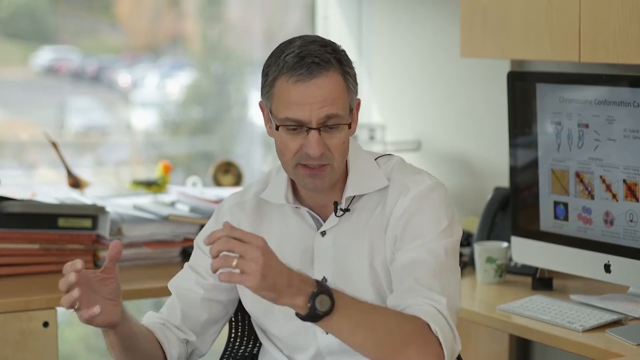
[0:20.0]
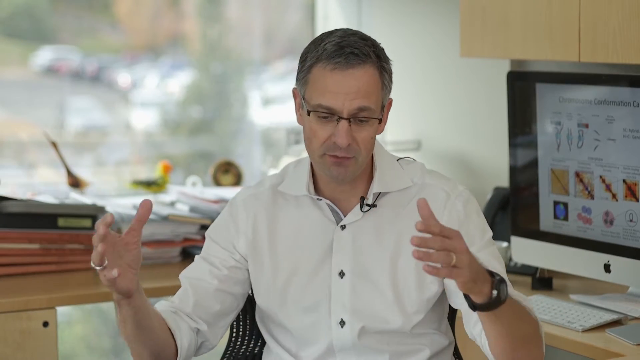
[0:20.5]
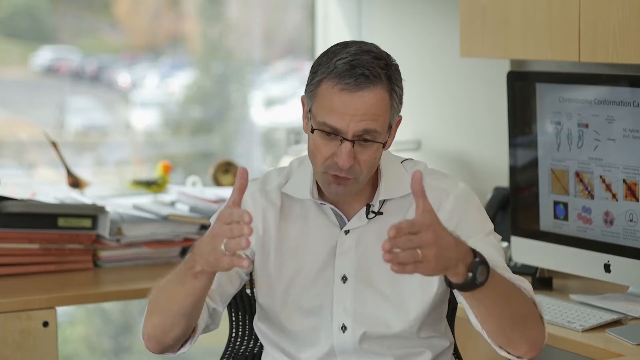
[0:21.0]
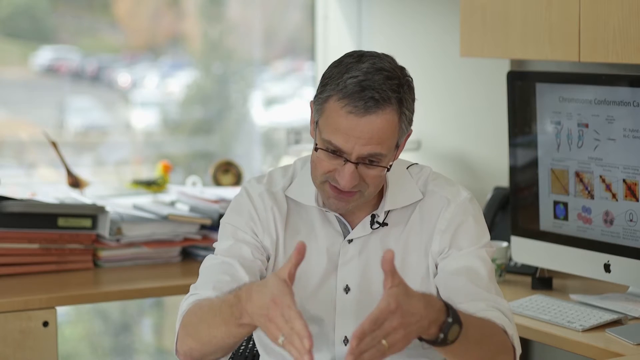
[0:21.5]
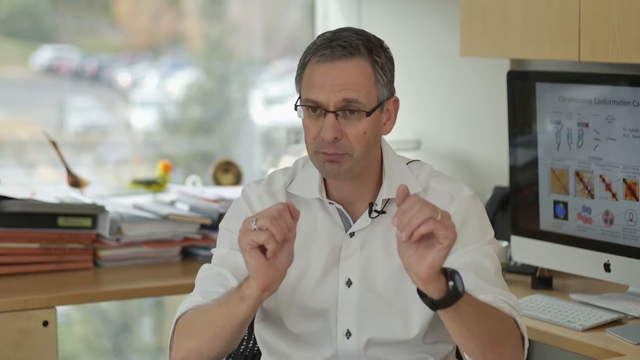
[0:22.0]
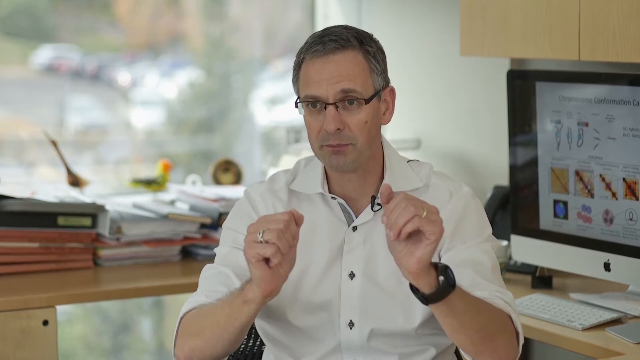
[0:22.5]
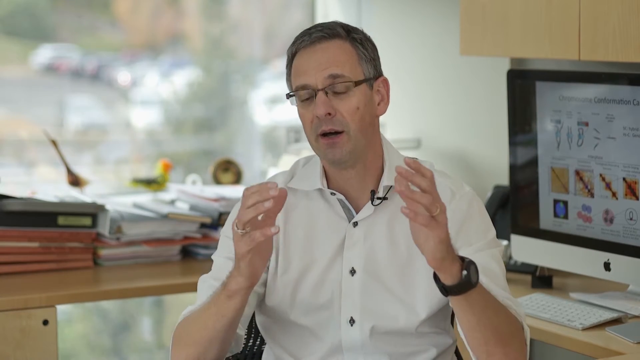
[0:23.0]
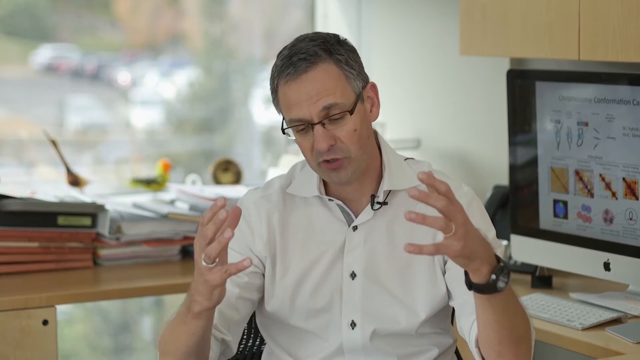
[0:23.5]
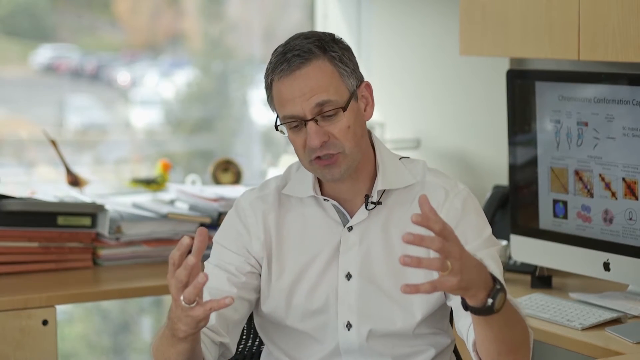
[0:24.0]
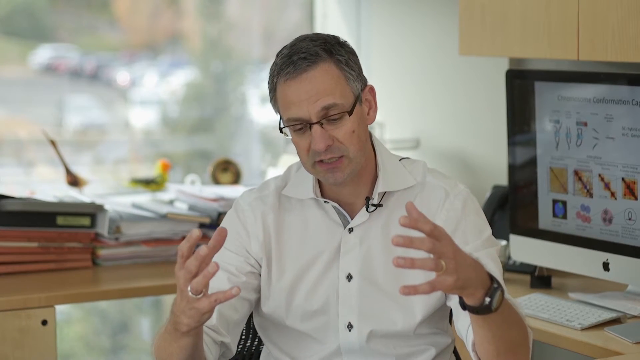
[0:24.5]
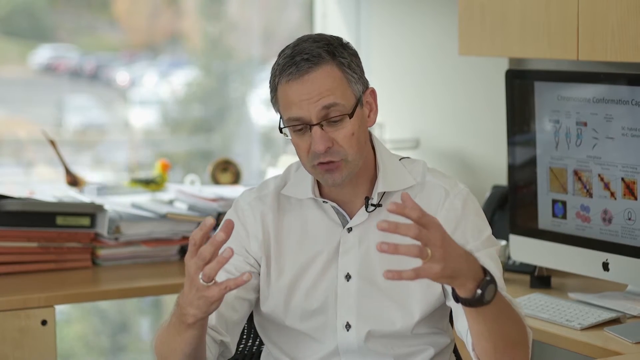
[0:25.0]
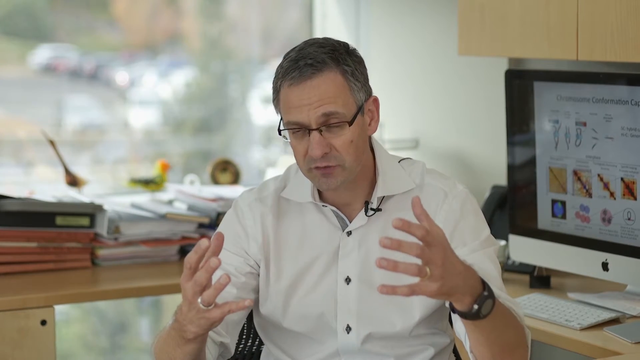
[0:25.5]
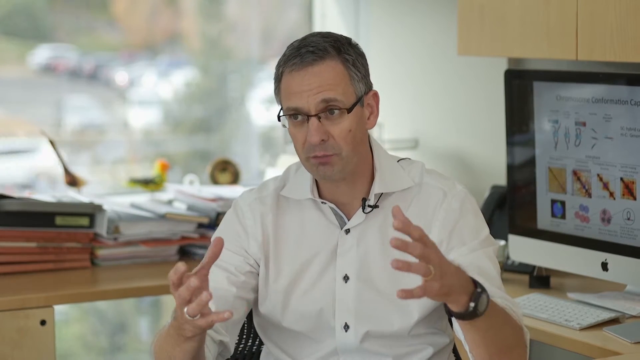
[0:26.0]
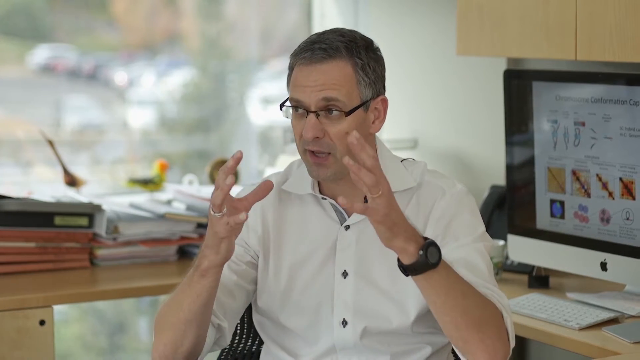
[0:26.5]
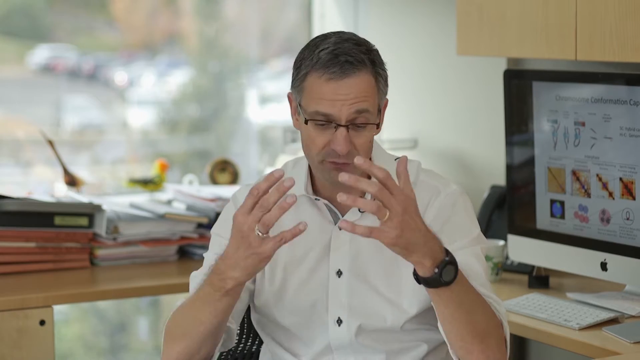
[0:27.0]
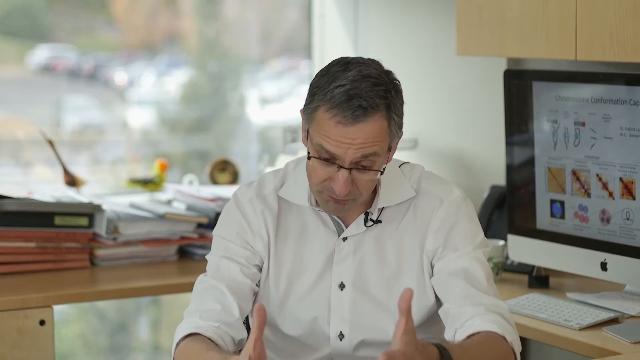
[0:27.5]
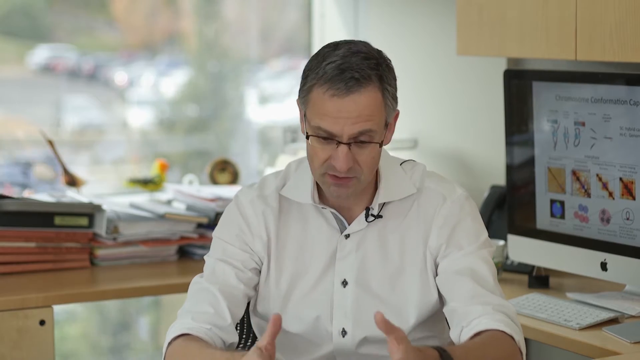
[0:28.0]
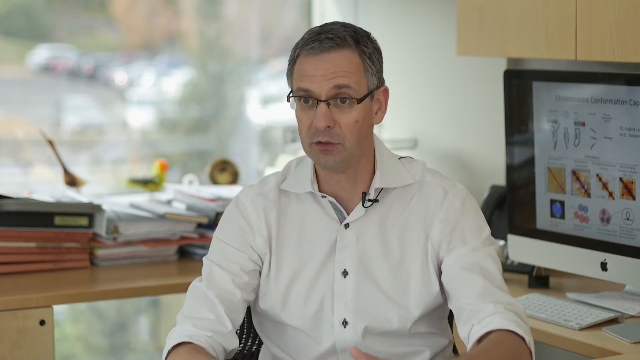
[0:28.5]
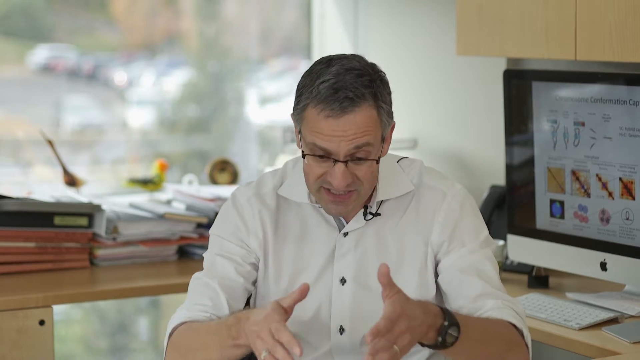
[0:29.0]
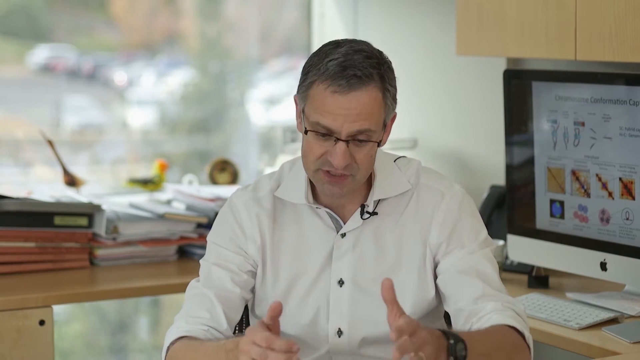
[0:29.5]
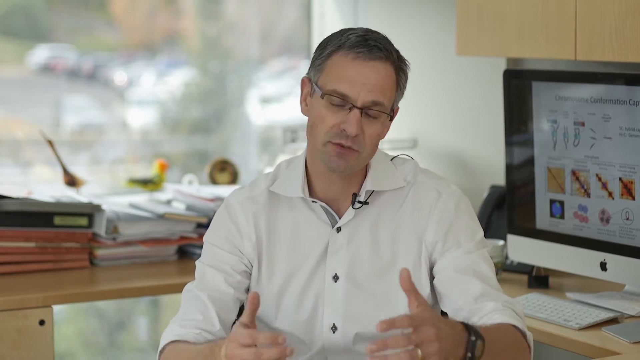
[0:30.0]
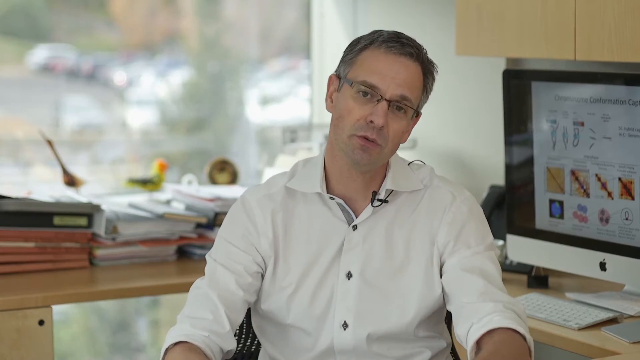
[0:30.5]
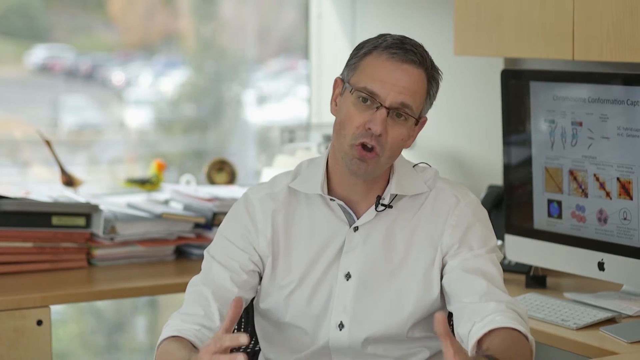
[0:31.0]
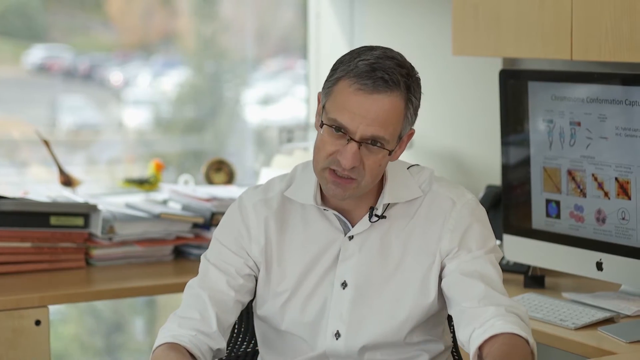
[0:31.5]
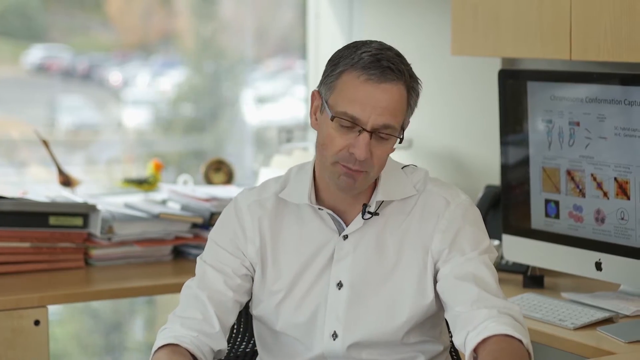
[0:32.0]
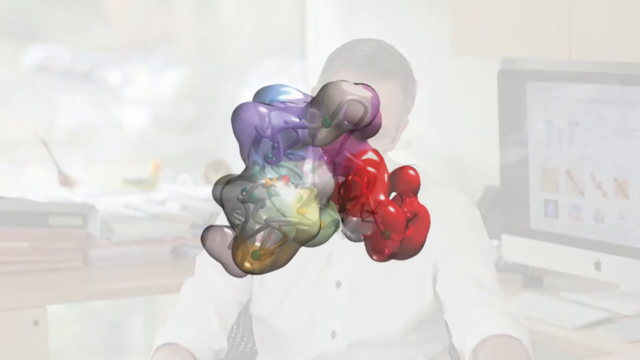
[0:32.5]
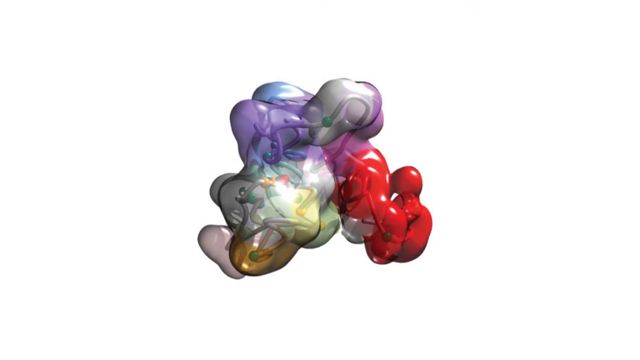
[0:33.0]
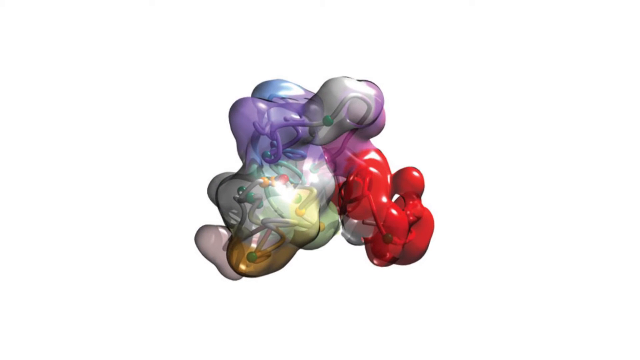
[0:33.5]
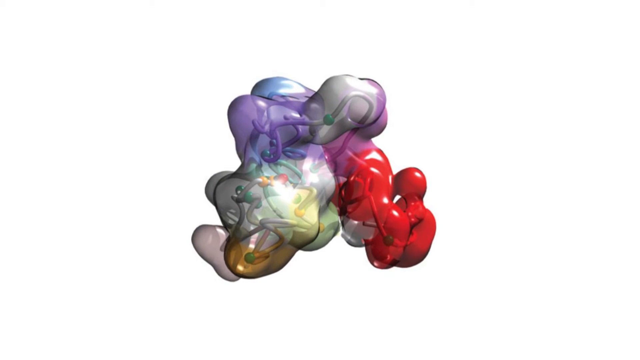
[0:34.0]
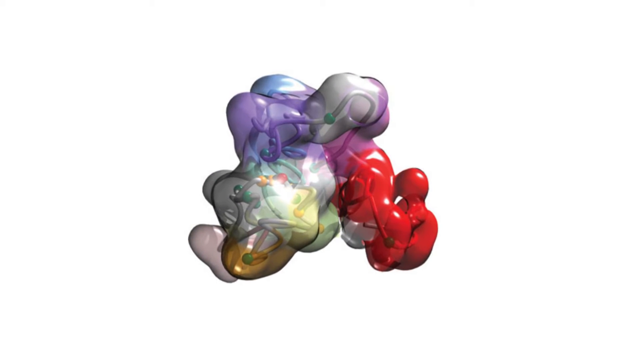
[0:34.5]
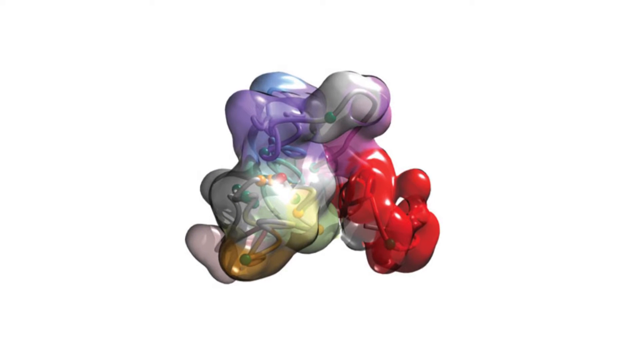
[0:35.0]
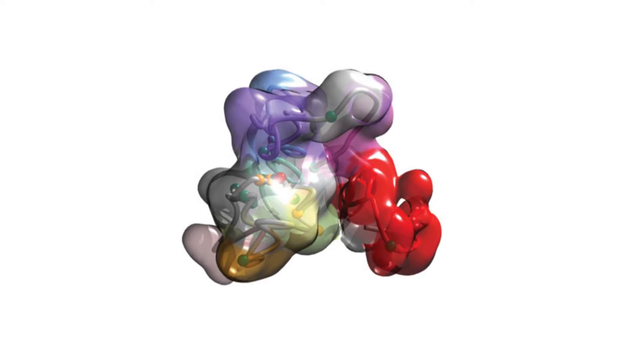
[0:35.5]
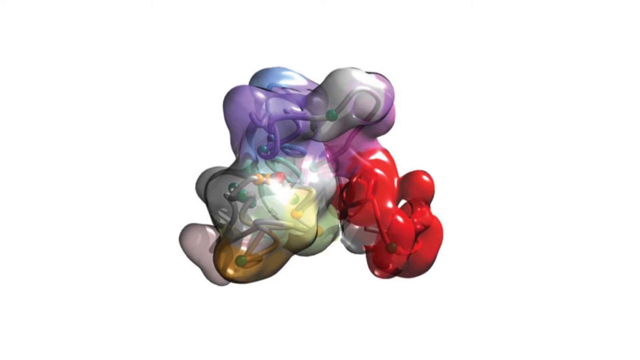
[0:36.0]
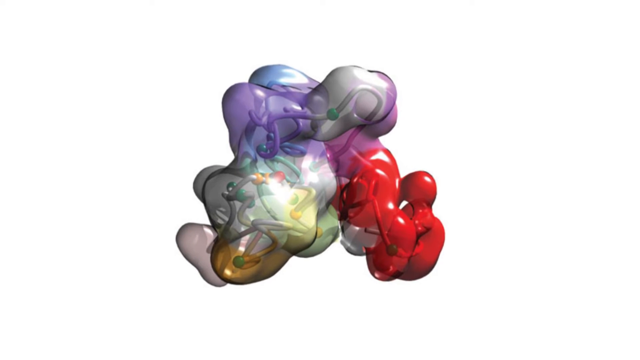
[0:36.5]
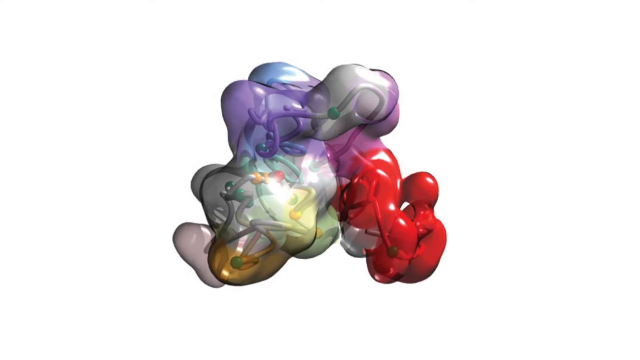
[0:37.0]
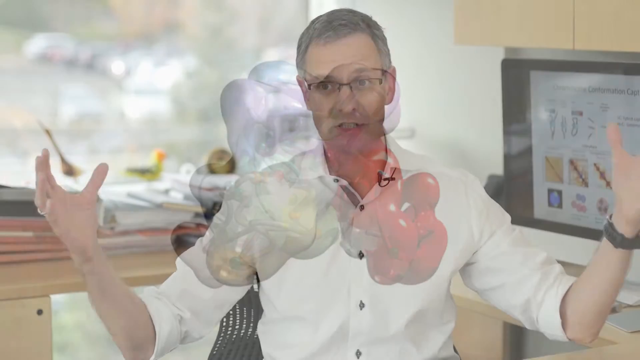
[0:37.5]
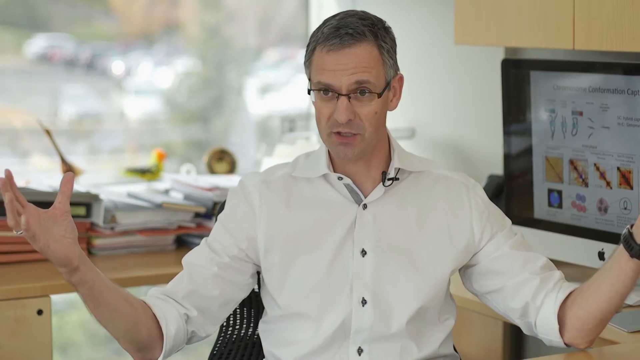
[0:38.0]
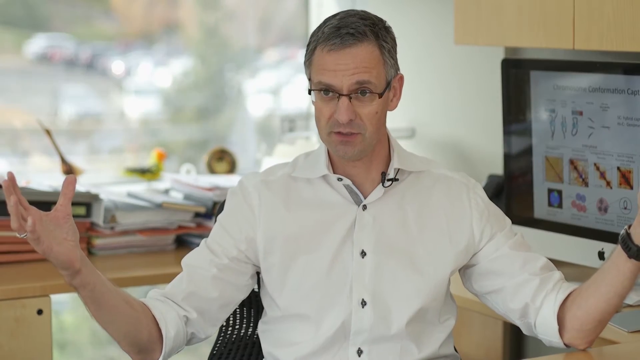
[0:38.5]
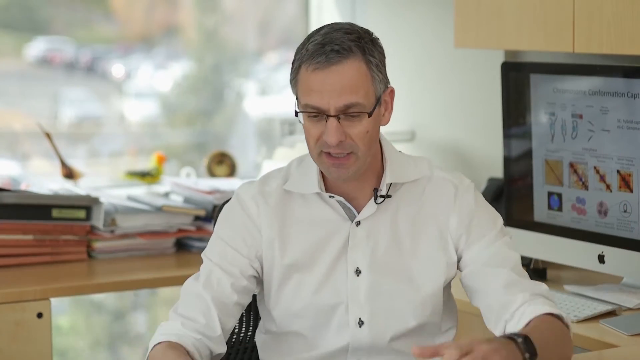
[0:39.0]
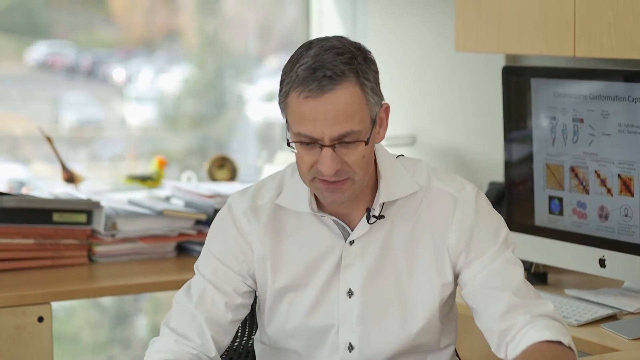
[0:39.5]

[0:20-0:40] The professor wears a microphone on his collar, glasses, a watch and a wedding ring. An Apple computer monitor is right next to him, and there is a coffee cup and a phone on the desk. Daylight comes through a big window, and what looks like a parking lot is outside it. He has little facial hair and talks a lot with his hands. The view cuts to some type of molecular cell or something, a multicolored blob, then returns to the professor still talking with his hands. There is not much text on the screen.